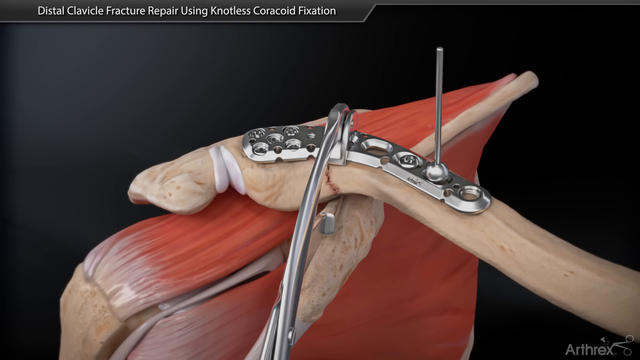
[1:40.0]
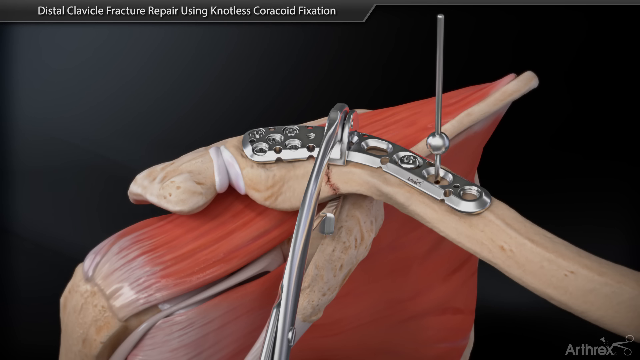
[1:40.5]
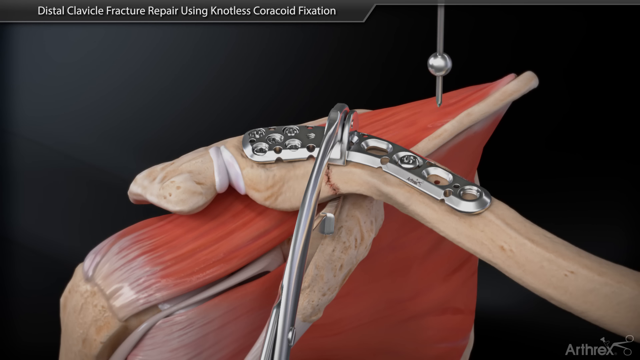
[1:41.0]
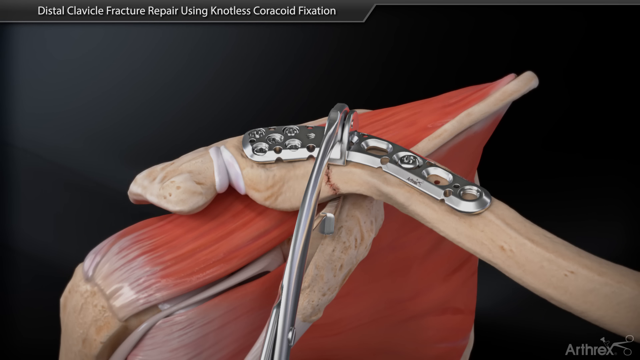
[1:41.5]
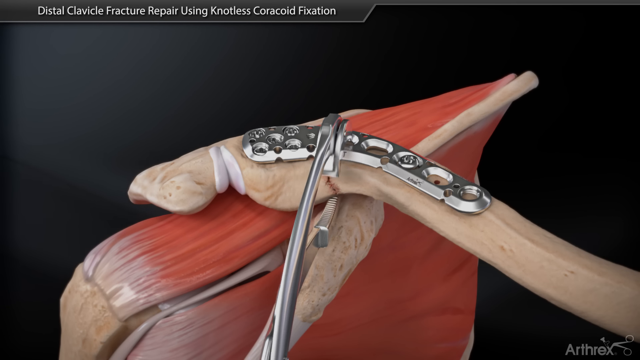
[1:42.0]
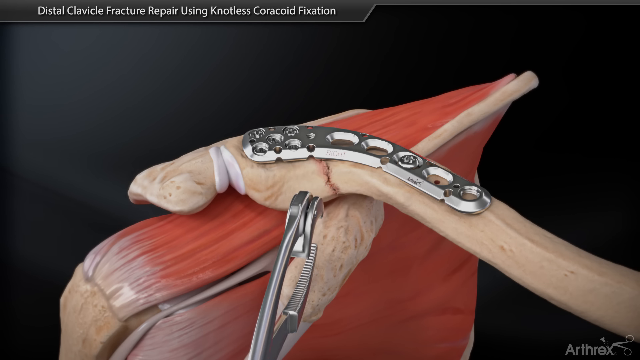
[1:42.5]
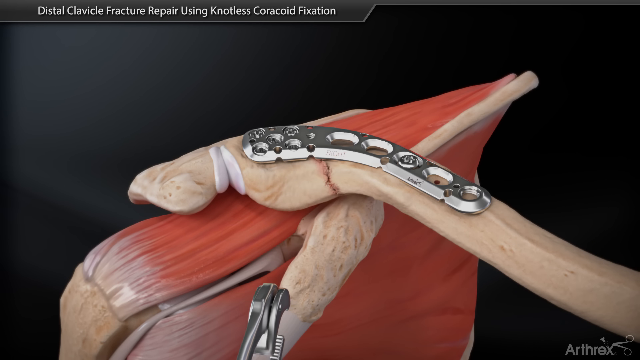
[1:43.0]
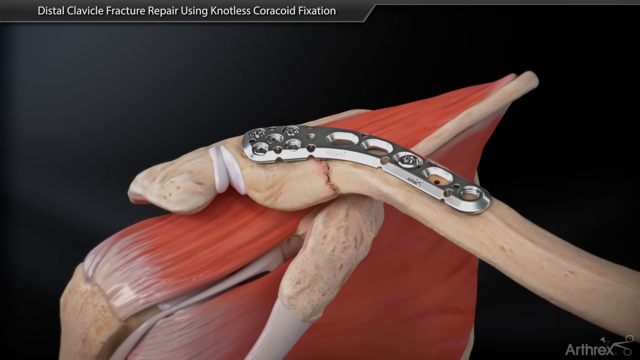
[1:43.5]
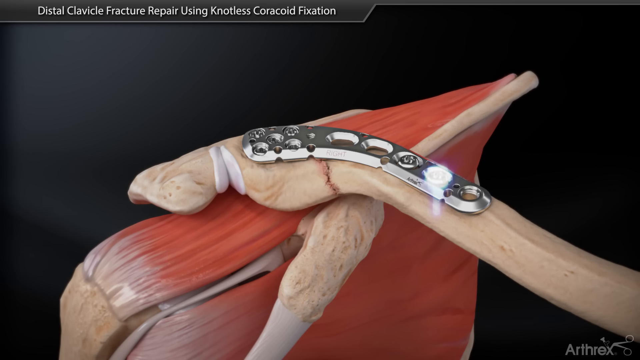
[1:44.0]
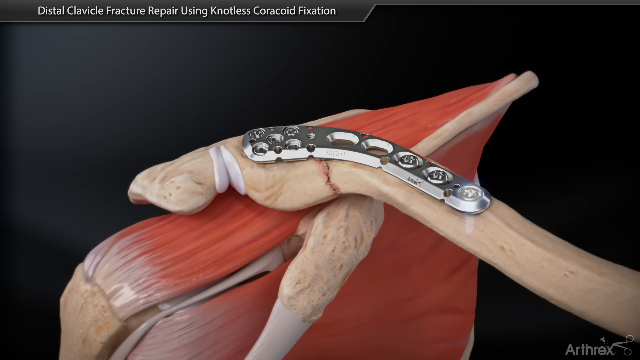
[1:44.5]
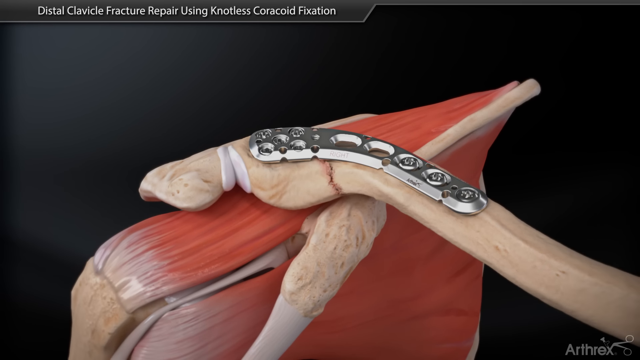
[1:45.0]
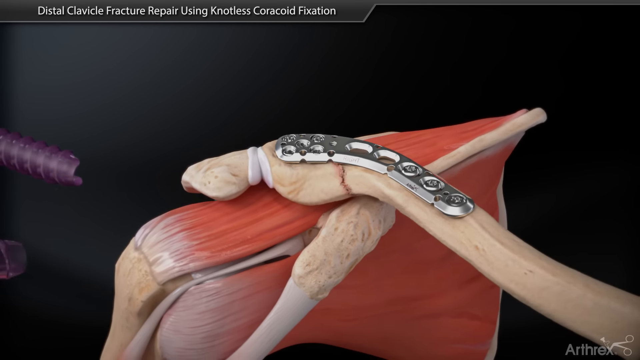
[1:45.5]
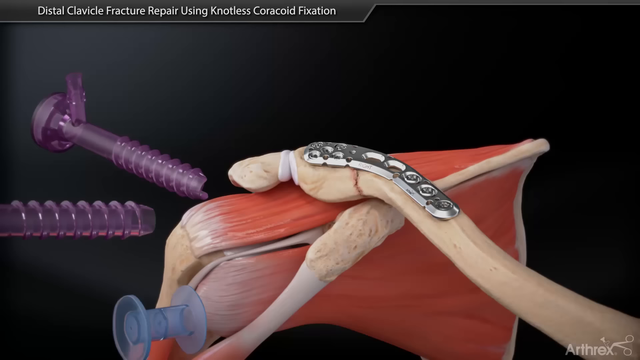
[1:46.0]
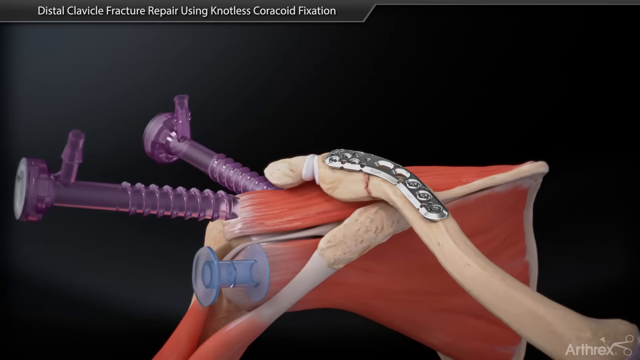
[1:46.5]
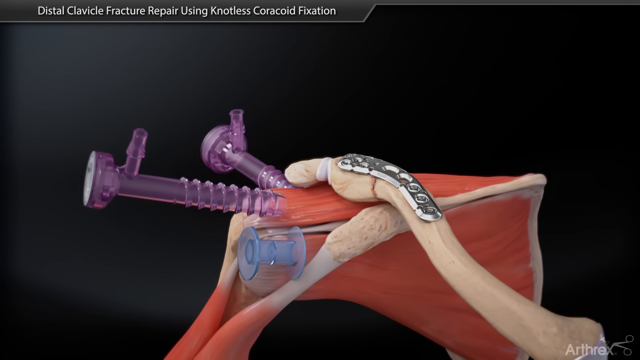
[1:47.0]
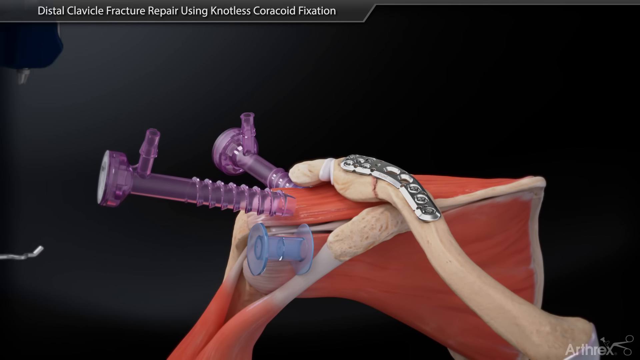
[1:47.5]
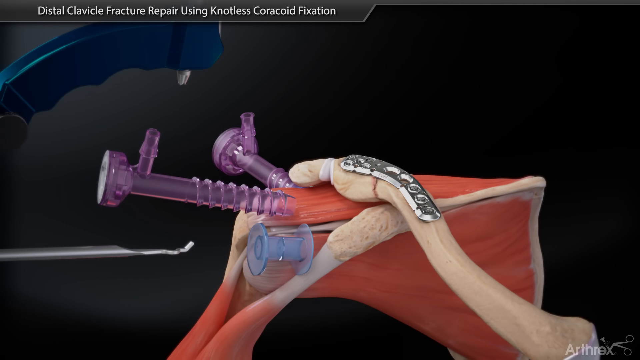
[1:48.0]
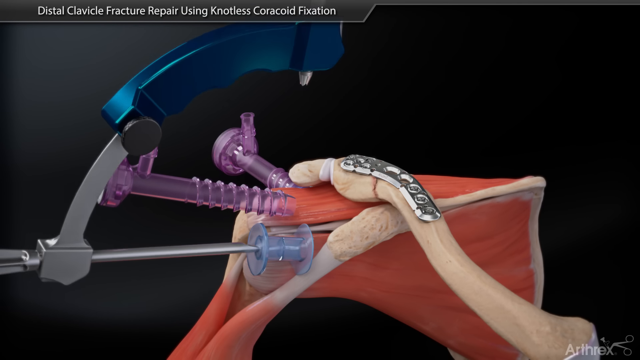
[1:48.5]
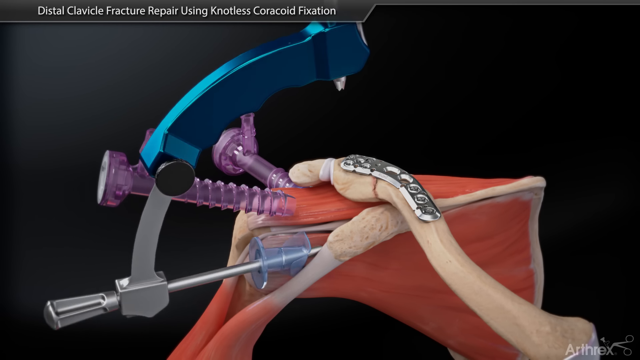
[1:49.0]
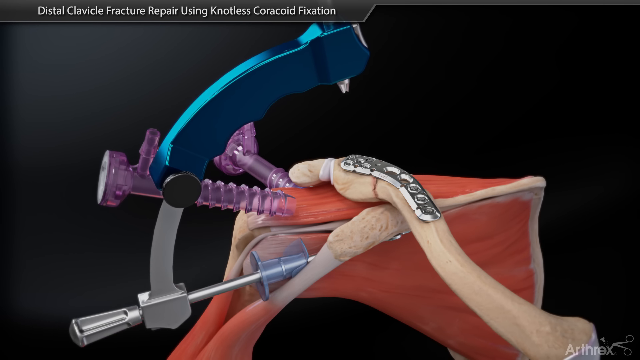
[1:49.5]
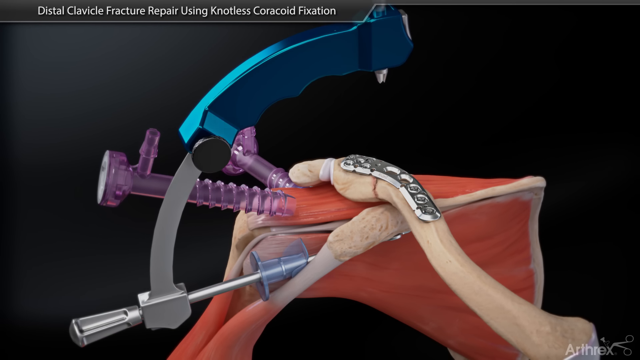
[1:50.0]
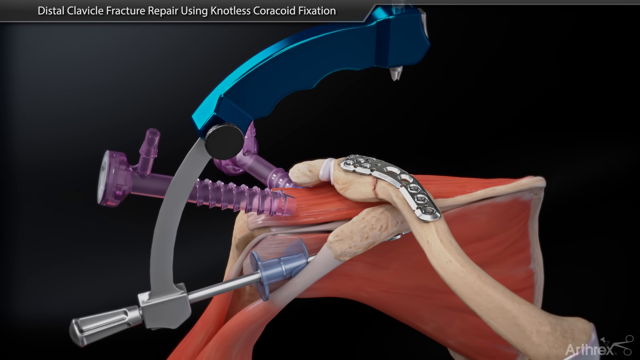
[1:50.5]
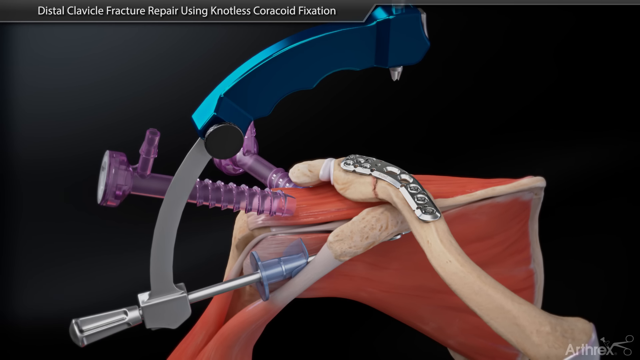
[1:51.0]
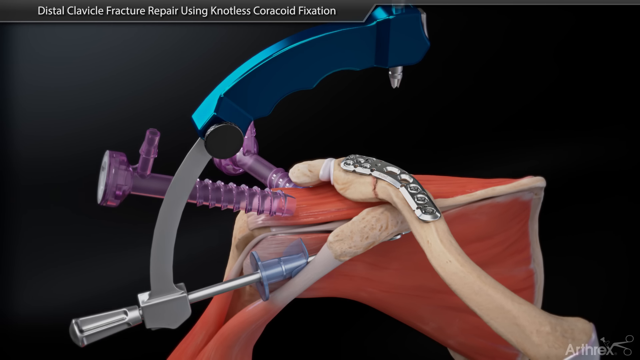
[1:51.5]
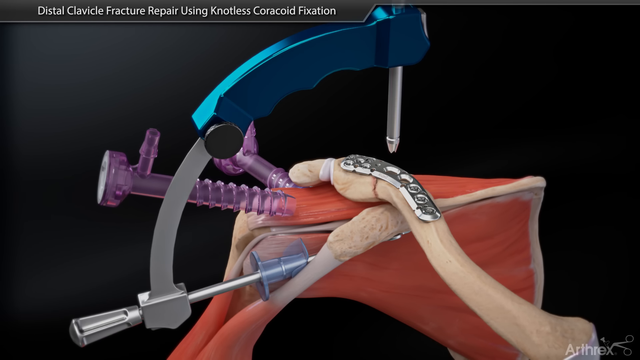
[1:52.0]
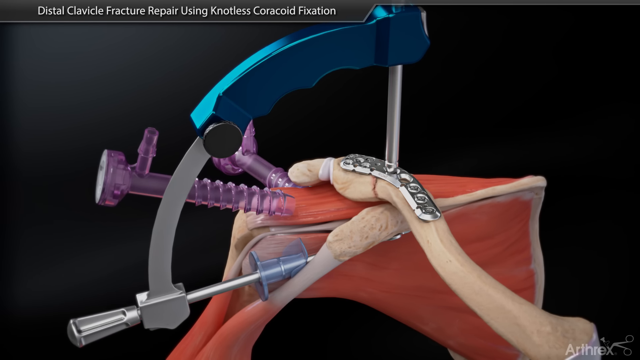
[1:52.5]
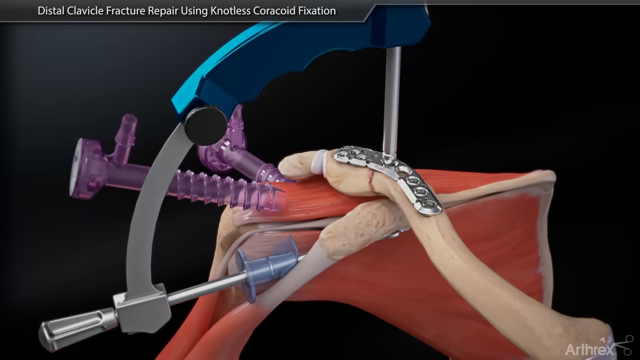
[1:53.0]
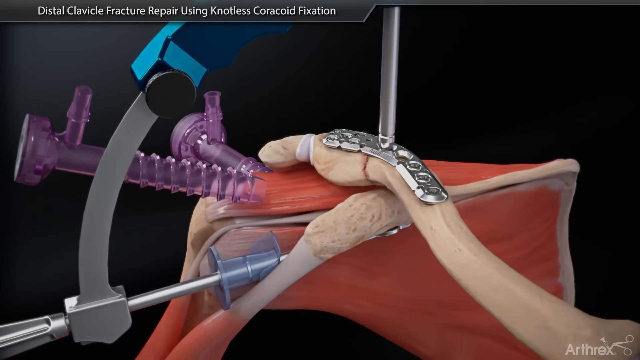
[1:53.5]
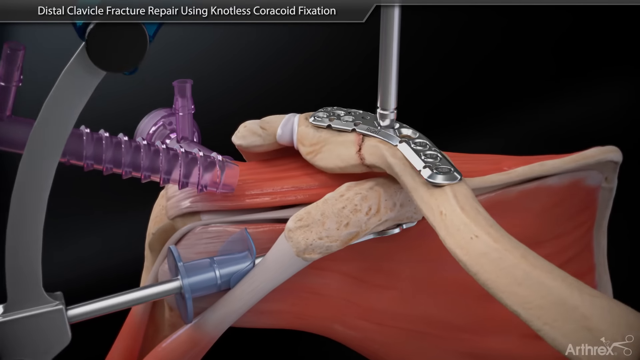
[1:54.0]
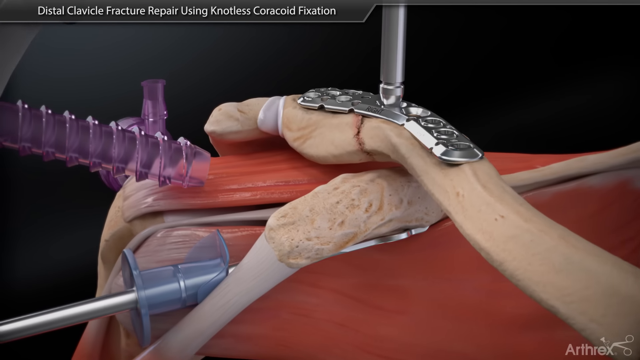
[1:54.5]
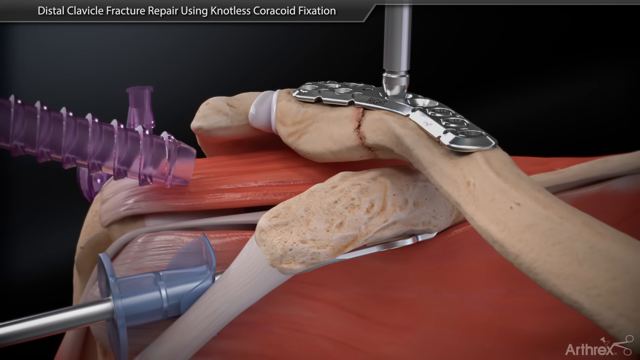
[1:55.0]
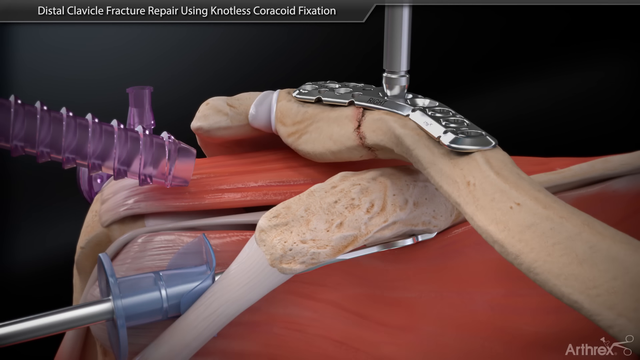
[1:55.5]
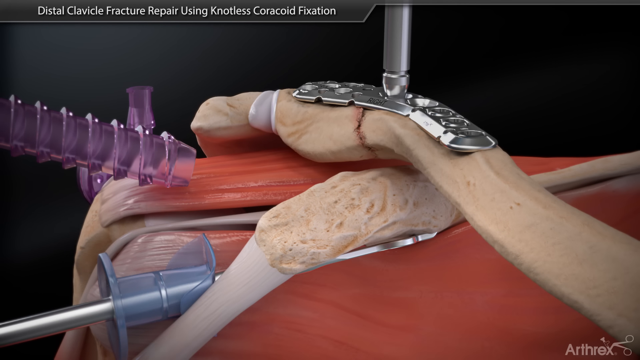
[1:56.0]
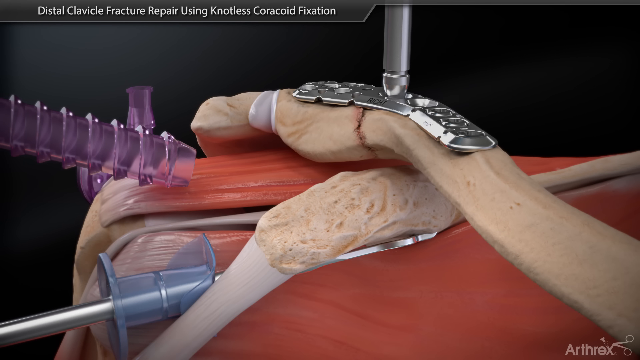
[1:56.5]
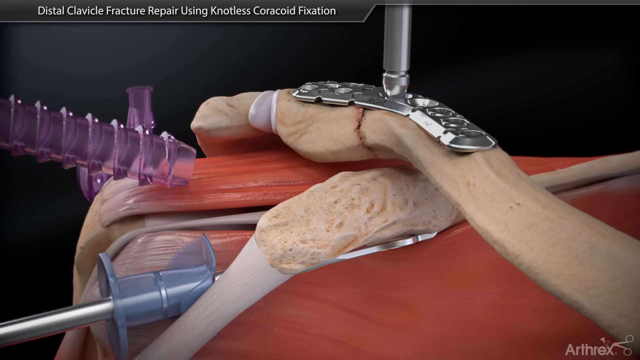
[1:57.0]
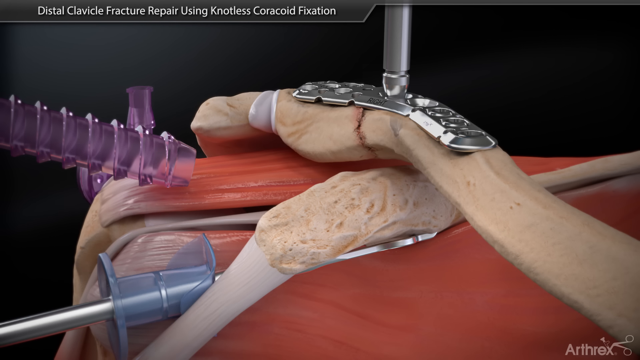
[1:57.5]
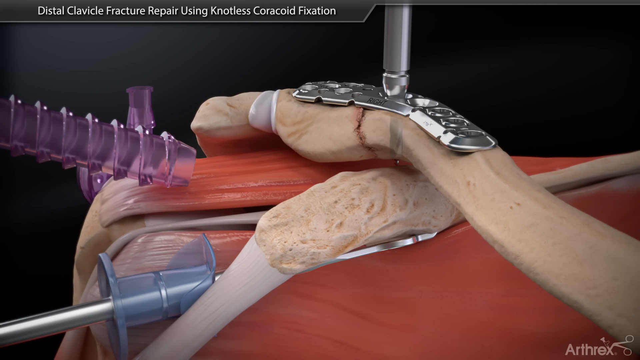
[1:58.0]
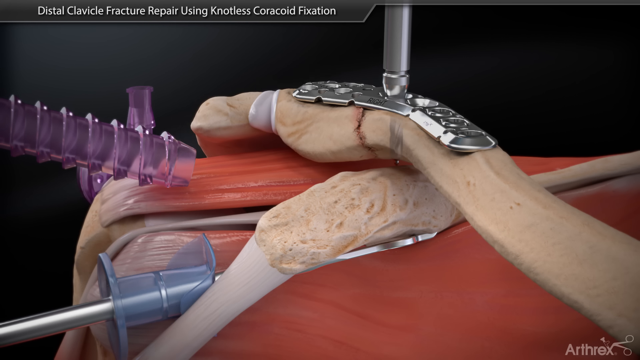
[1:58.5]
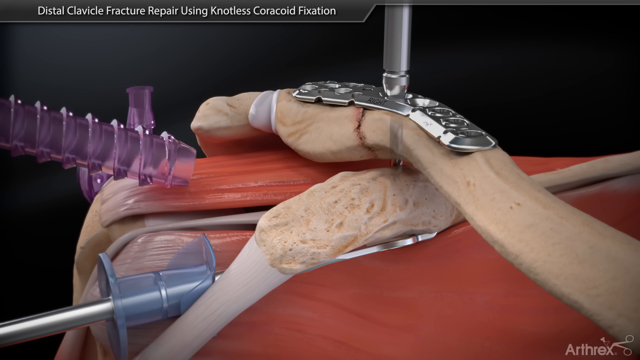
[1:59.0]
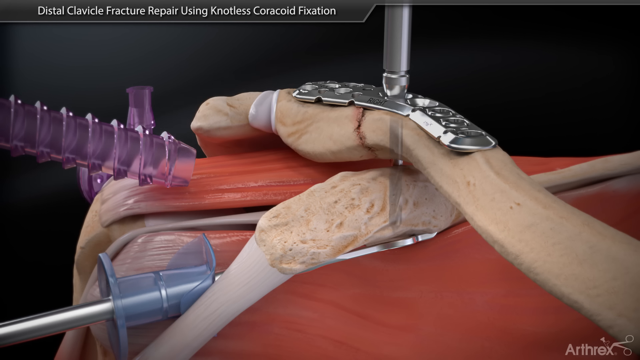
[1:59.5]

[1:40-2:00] The little ball with the pin tip on the end is still in the second hole from the right, with a big piece of the metal sticking out for the pin. It lifts and goes off the top of the screen. The clamps unclamp, go down angled a little to the left, and go off the bottom of the screen. The three holes farthest to the right are shown to have screws in them, kind of lit up in a light blue color. The muscle, which was kind of angled down to the left, twists until it is straight across, and the bone that was going off the screen comes down to the bottom right corner. From the bone coming off the side, tendons go down to the left, and at the end of the muscle on the left side another tendon comes down. Two long, slender purple pieces come in, one from the back side and one from the left side. Their right ends have little kind of drill grooves on top and a small little cylinder, and their far left ends are big and round; they go in from the back and from the front. In front of the muscle at the bottom left is something that almost looks like a tape roll without the tape. A big device comes in through the tape section, a little rod goes up and under the bone on the underneath, and a big metal part over the top with a little drill bit sticking out of it goes down. The view zooms in on the bone there, showing through the bone the drill going all the way through the top bone, the second bone, and the metal piece underneath the bottom bone.